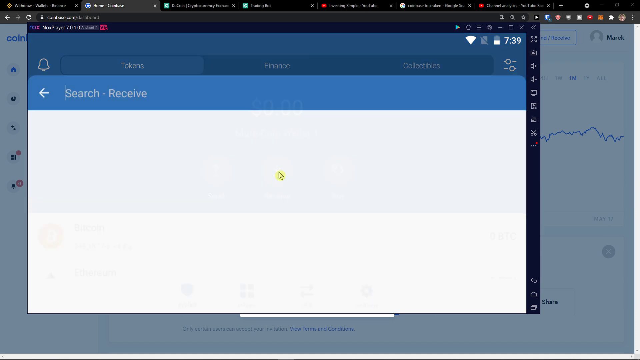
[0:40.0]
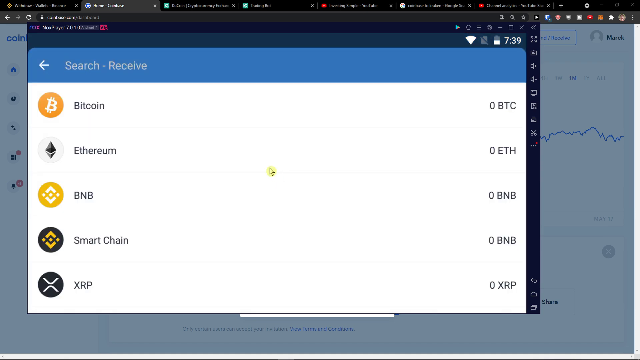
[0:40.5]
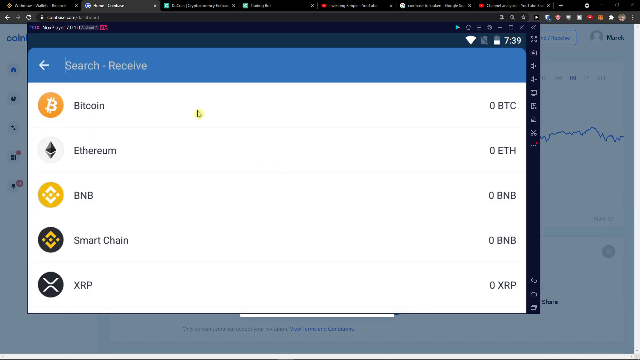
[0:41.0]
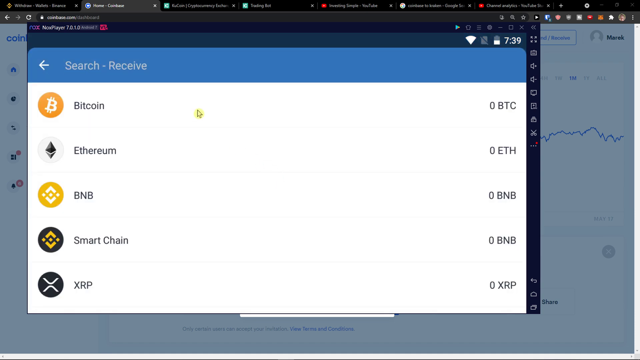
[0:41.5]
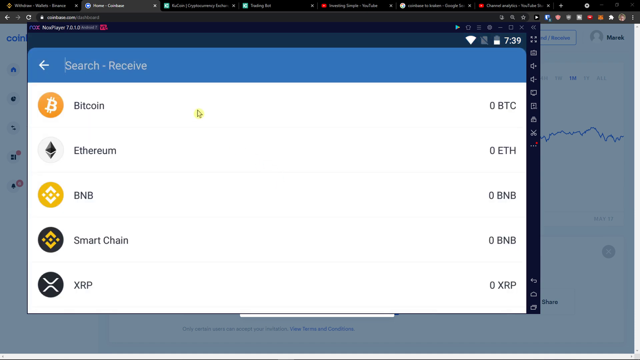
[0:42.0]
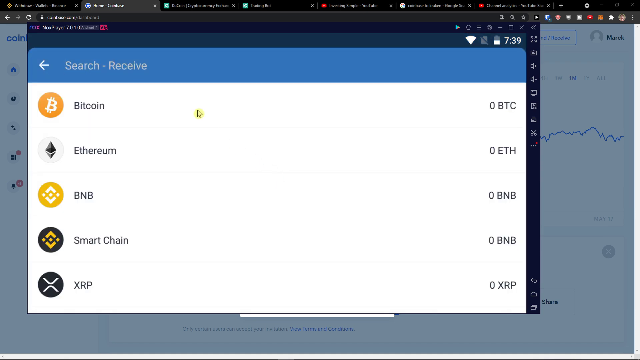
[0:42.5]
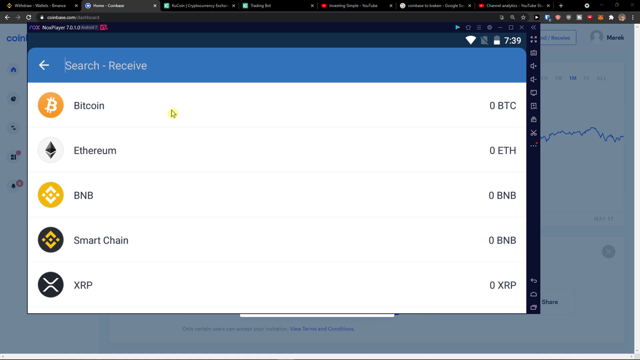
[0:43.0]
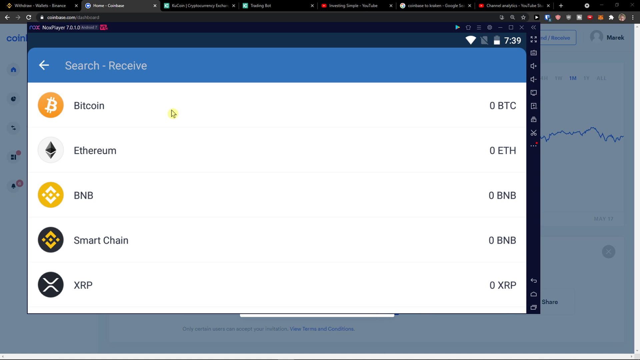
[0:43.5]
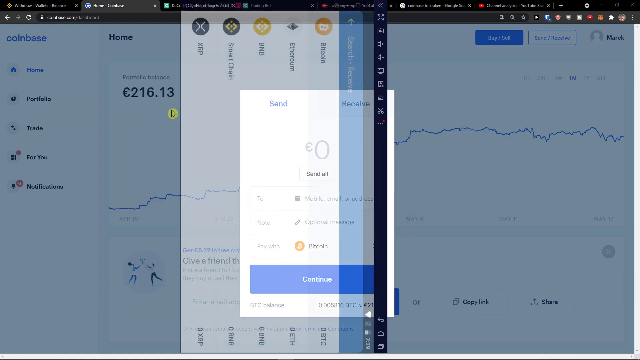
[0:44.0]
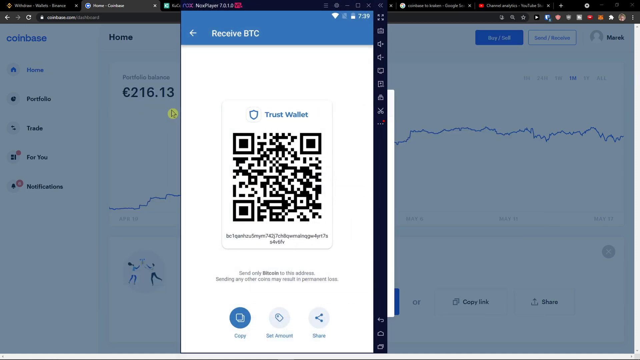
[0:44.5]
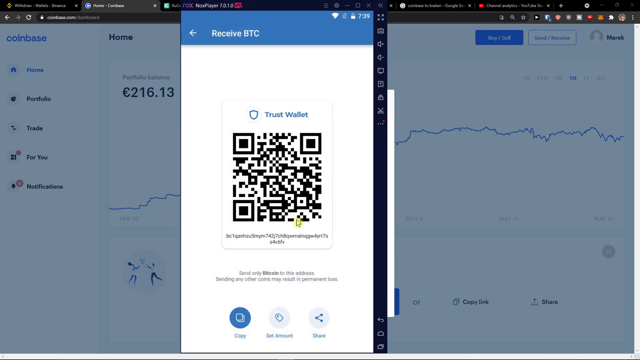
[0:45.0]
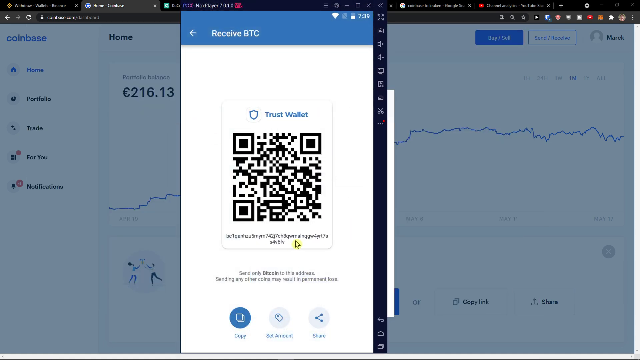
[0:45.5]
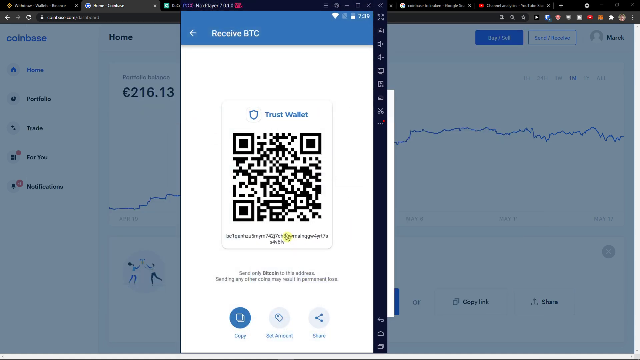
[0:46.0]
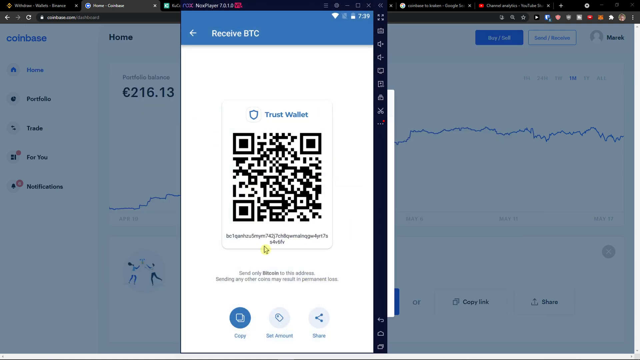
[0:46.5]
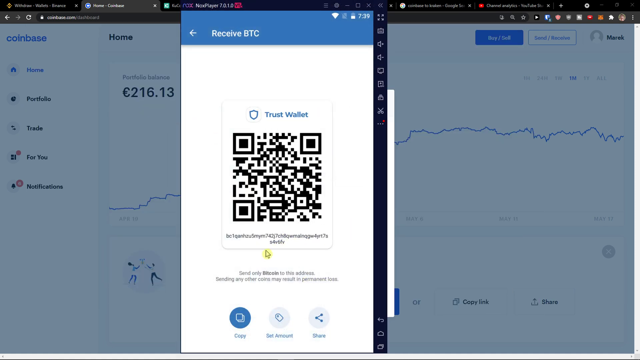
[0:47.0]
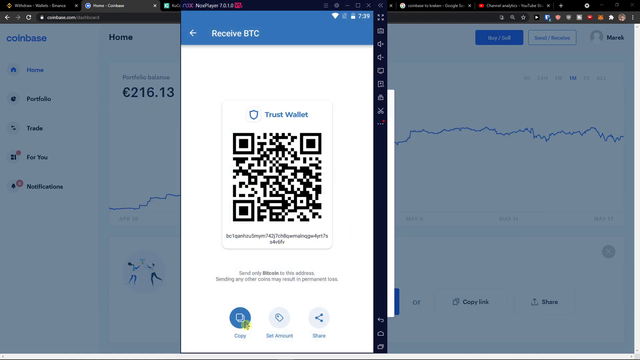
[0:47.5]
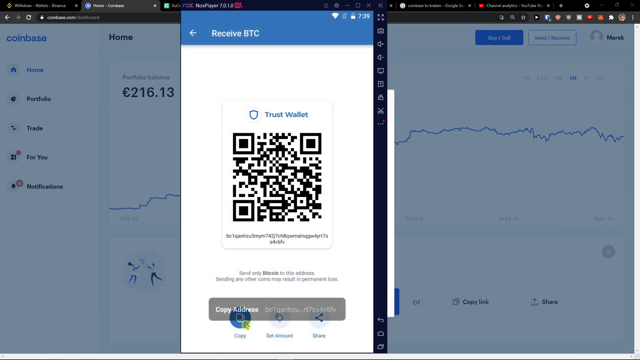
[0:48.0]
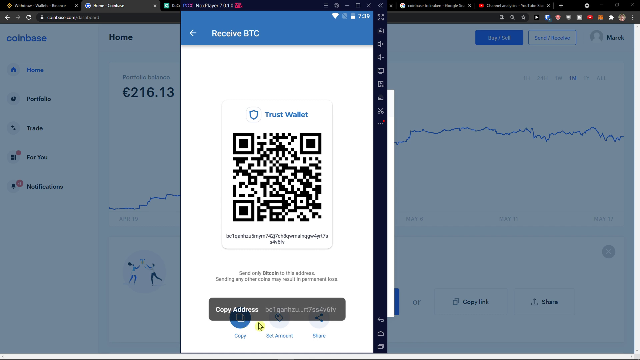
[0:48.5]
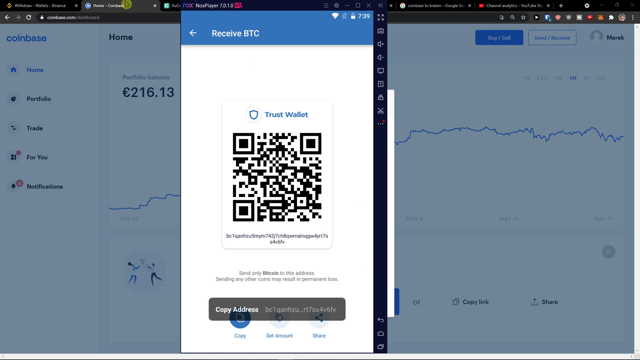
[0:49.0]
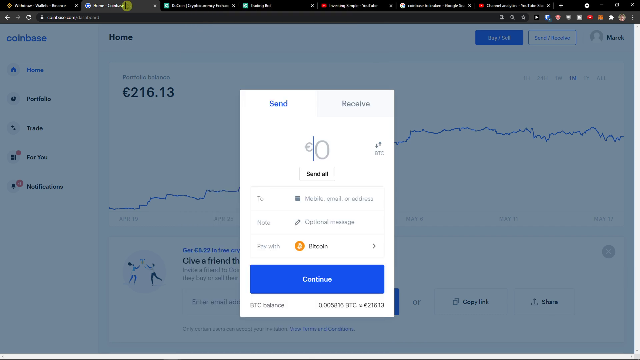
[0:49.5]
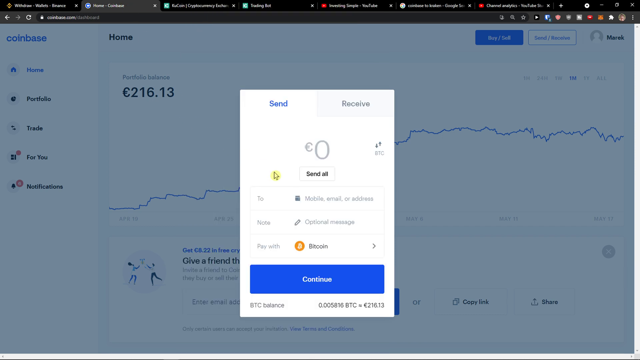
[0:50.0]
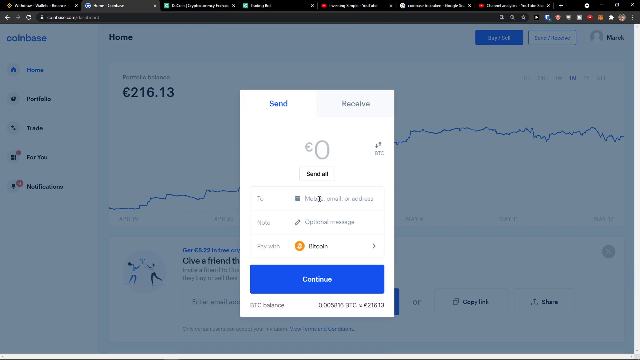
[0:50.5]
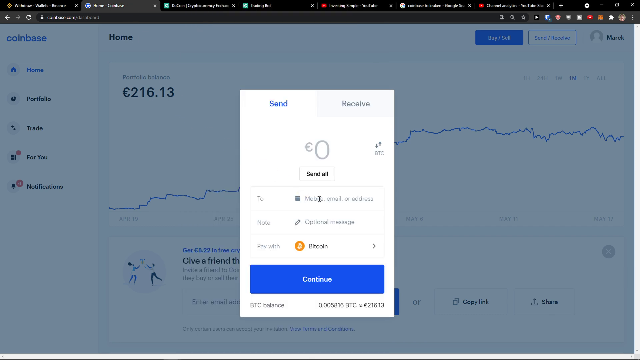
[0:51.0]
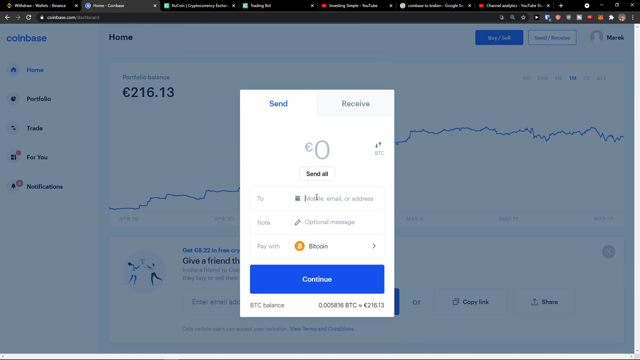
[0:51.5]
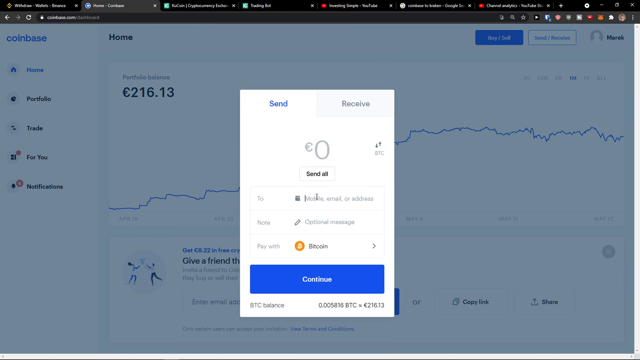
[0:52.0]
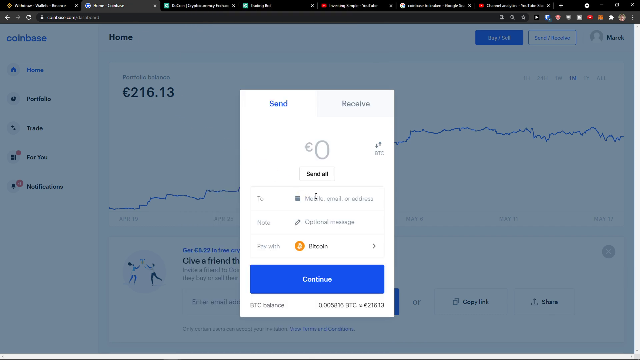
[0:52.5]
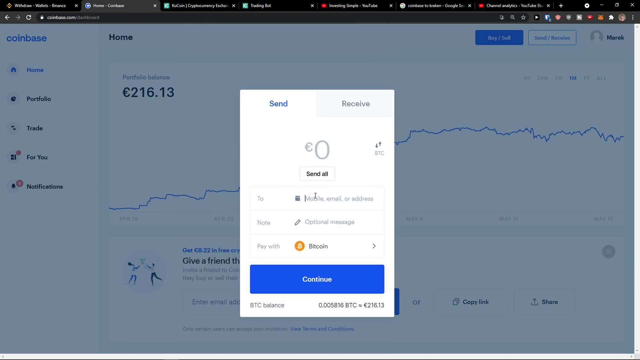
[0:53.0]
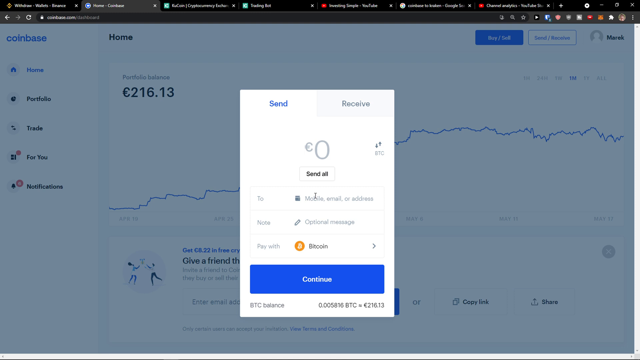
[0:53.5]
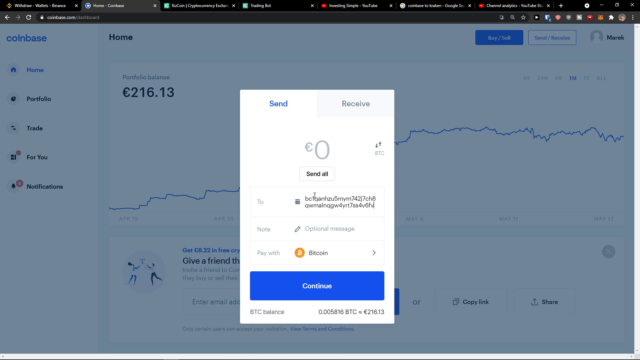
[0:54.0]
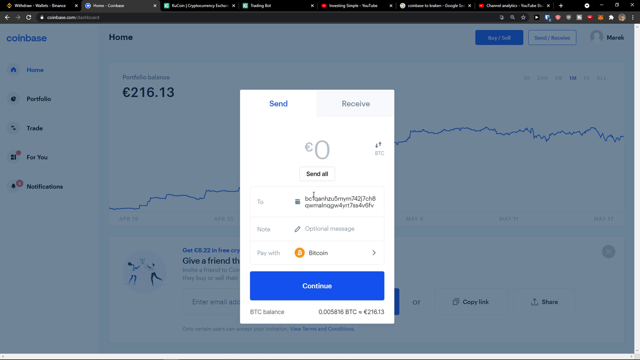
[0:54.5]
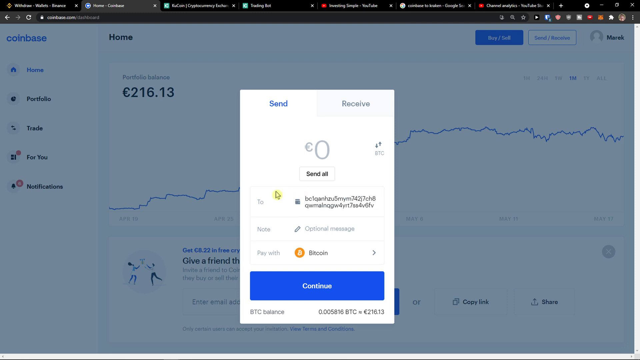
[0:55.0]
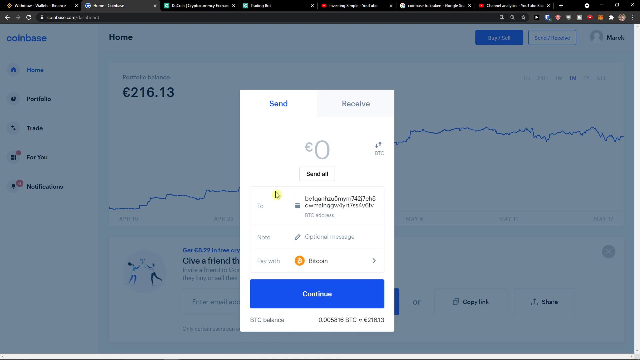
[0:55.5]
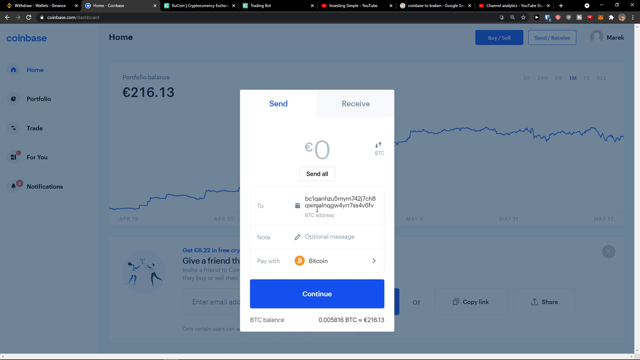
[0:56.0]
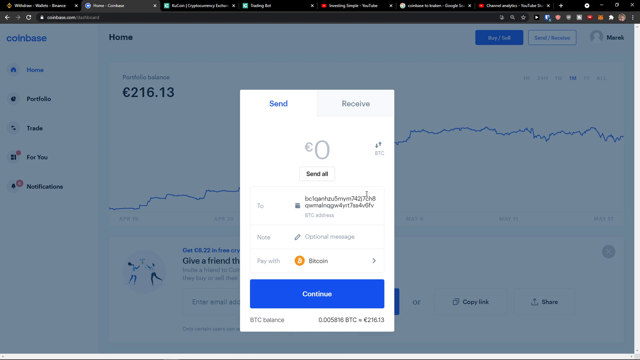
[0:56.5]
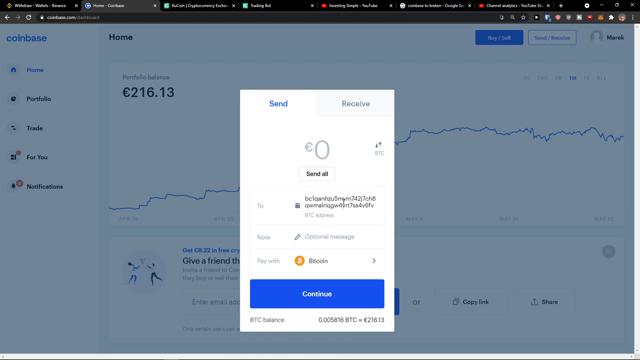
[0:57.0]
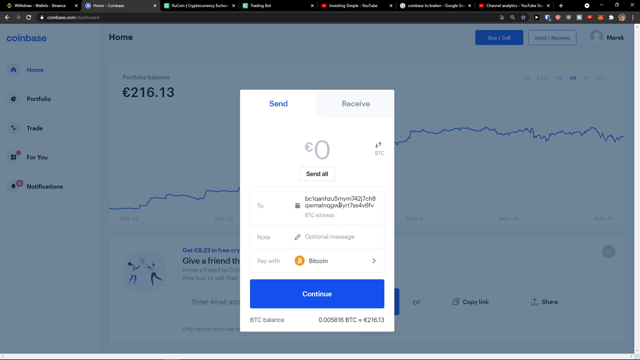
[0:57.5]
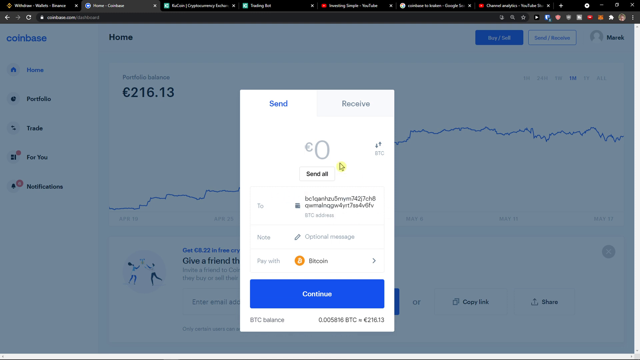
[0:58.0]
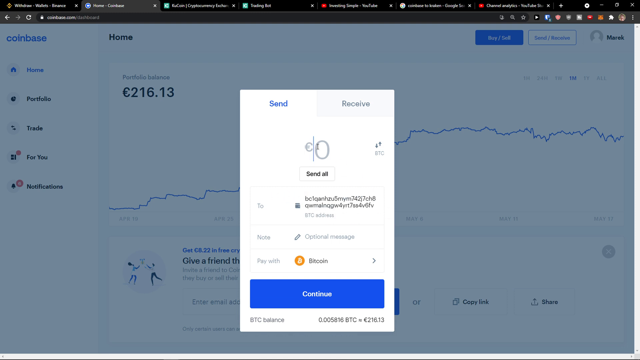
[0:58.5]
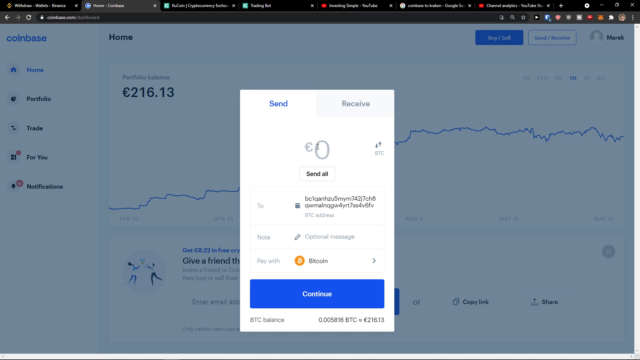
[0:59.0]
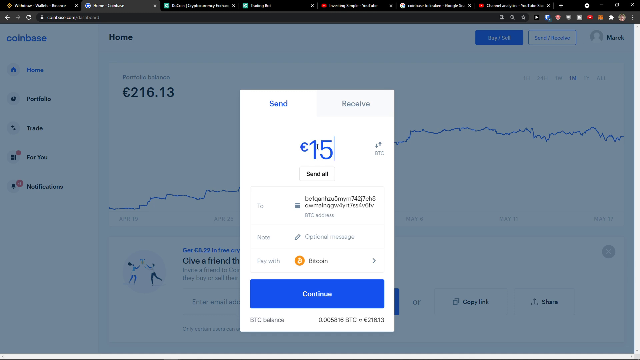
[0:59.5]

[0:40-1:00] A screen recording, probably on a computer, shows a couple of things open. In the background is a grayed-out Coinbase website with a bluish tint, and in front of it is a fairly large window that appears to be part of the website. A blue border at its top says "Search, Receive" with an arrow pointing to the left, and underneath are "Bitcoin", "Eretheum", "BNB", "Smart Chain" and "XRP", each with its own icon. The mouse cursor is yellow. The window gets smaller and spins around, and suddenly a narrower window with a QR code appears. Something below is clicked, and another small window opens with "Send, Receive" at the top, set to zero. The cursor blinks in the "To" field, and then something apparently is pasted into it. The cursor is jiggled and circled over the pasted text as if to emphasize it. The cursor then goes up to where "$0" used to be, and 150 is typed in as the amount, possibly in European money. The send option is selected.